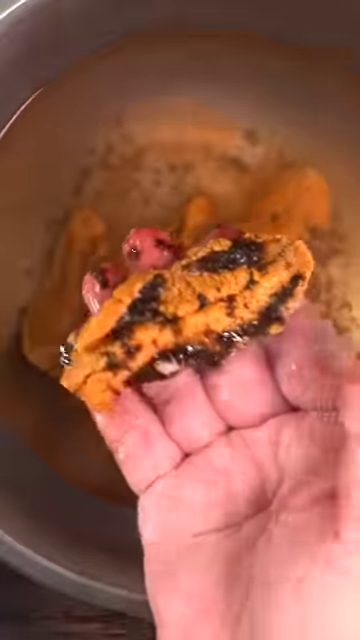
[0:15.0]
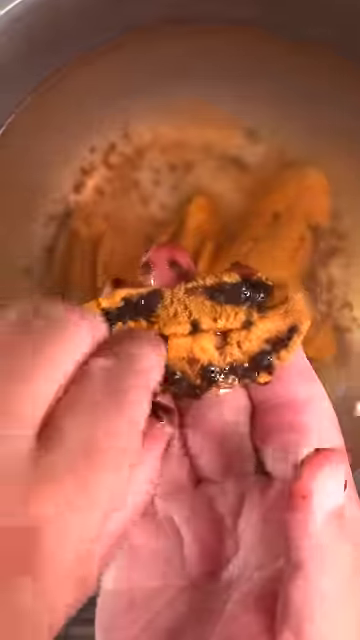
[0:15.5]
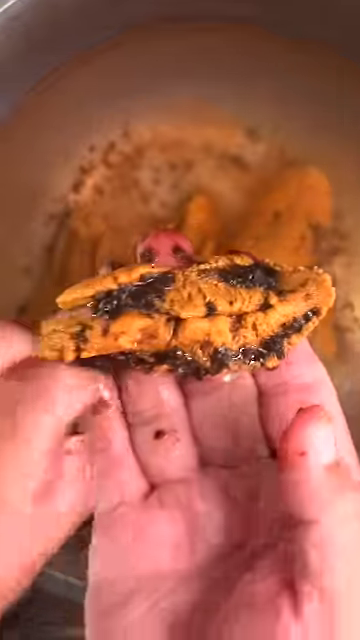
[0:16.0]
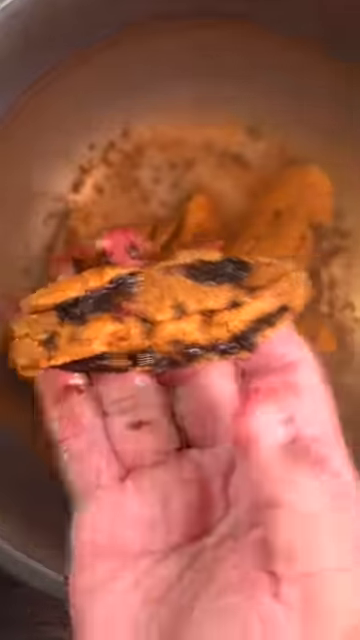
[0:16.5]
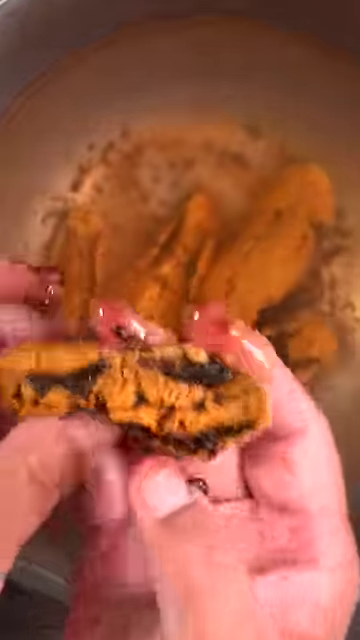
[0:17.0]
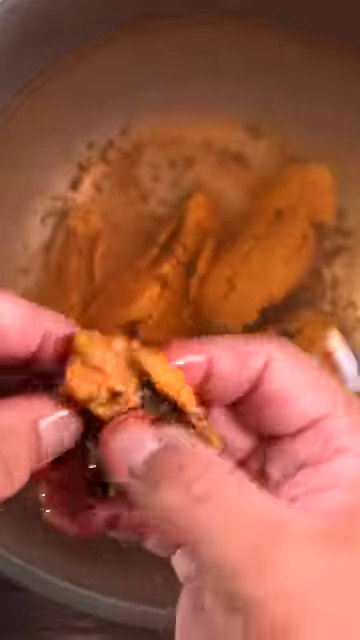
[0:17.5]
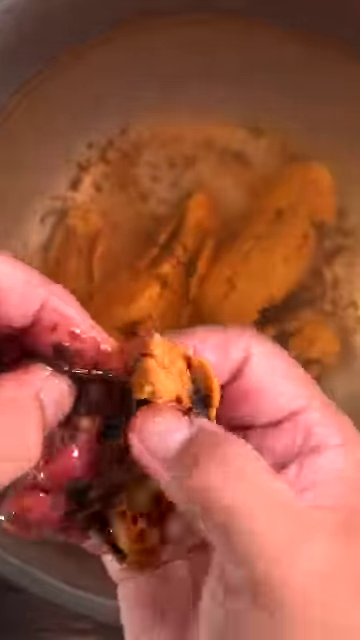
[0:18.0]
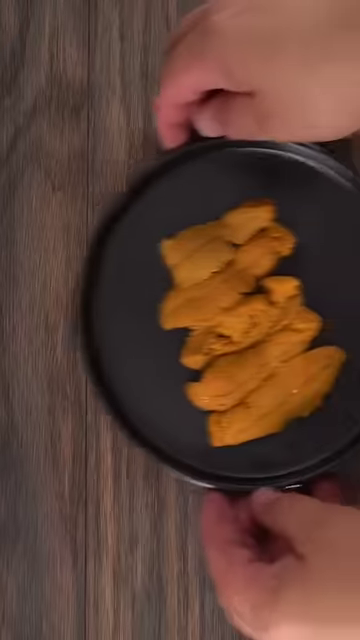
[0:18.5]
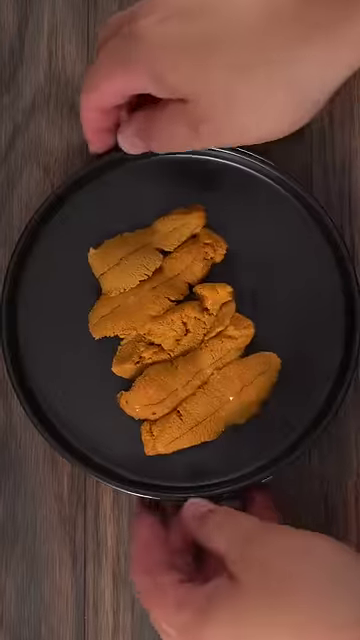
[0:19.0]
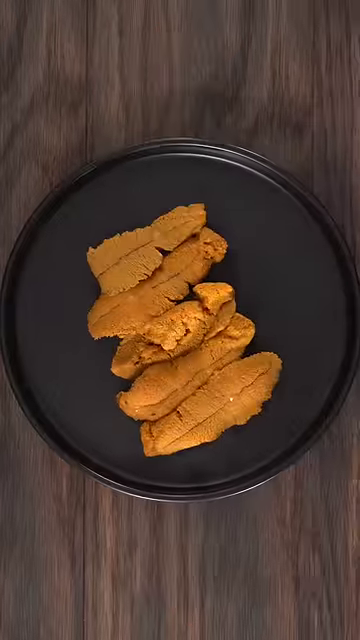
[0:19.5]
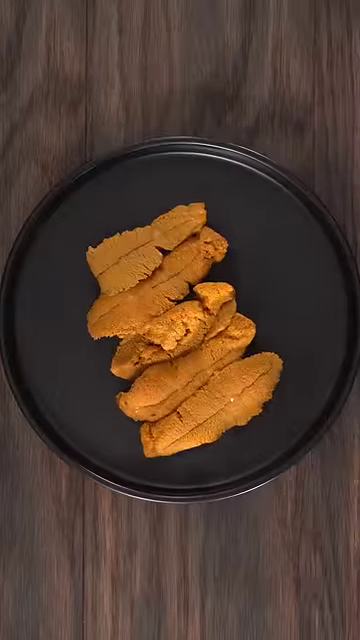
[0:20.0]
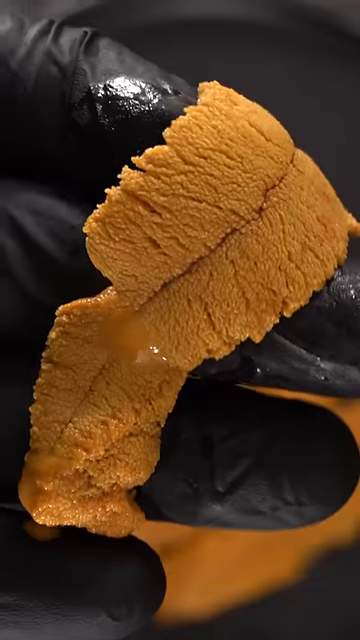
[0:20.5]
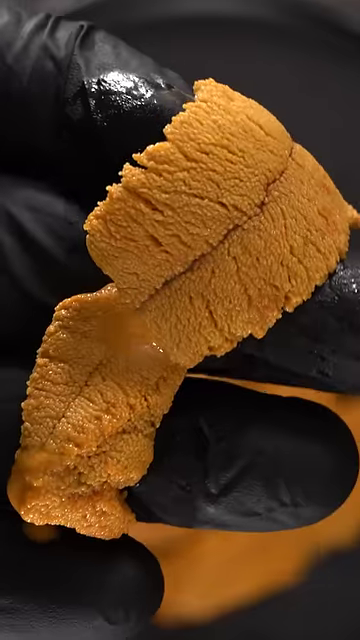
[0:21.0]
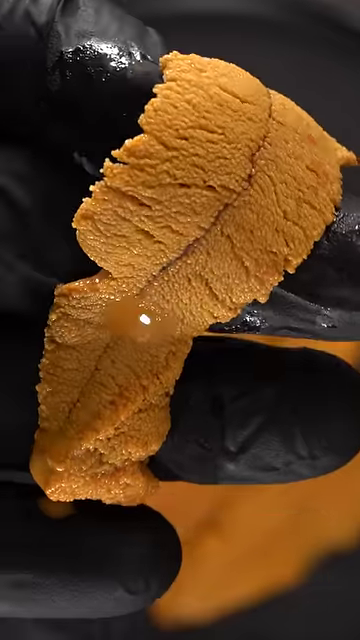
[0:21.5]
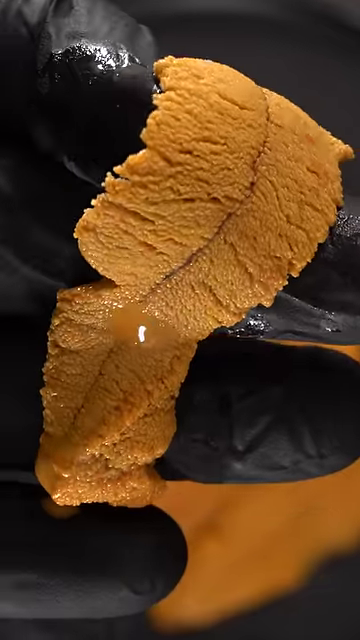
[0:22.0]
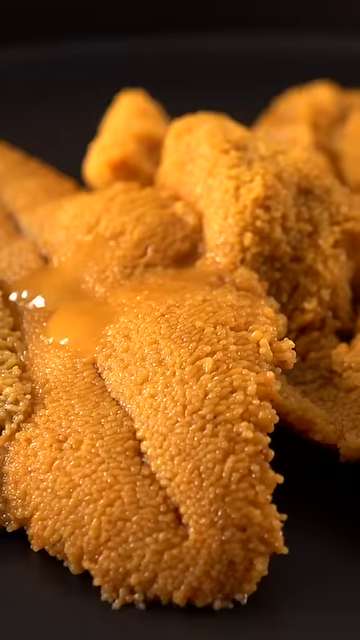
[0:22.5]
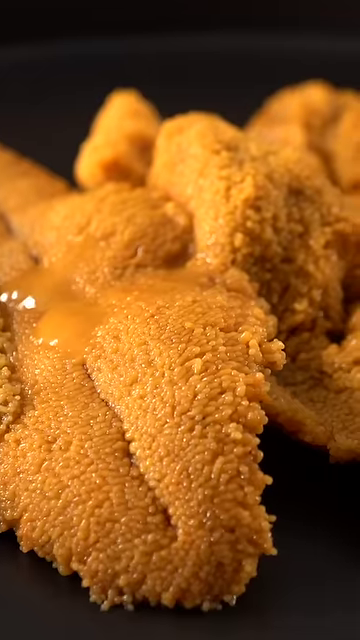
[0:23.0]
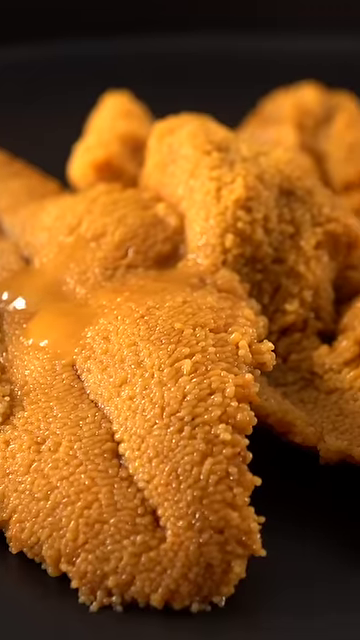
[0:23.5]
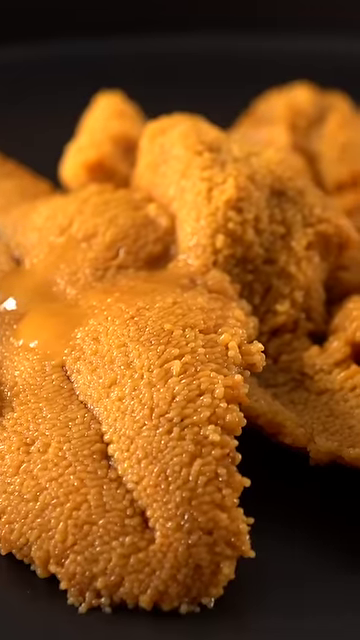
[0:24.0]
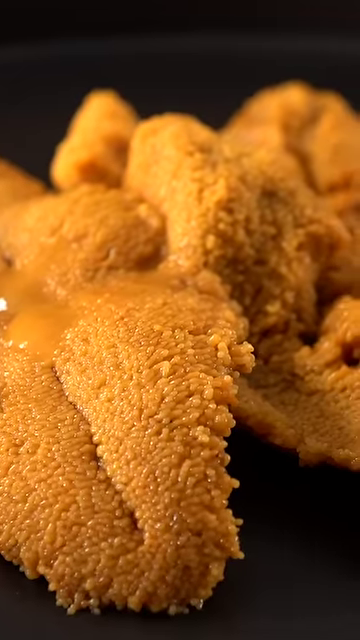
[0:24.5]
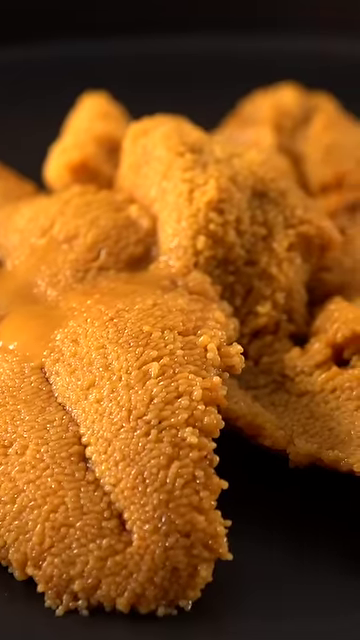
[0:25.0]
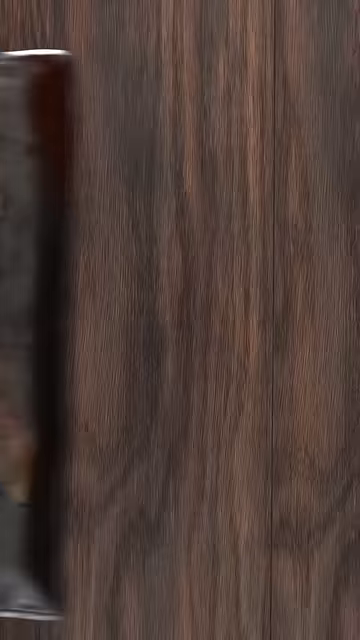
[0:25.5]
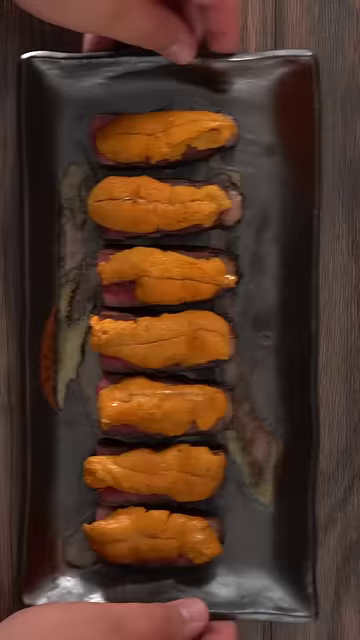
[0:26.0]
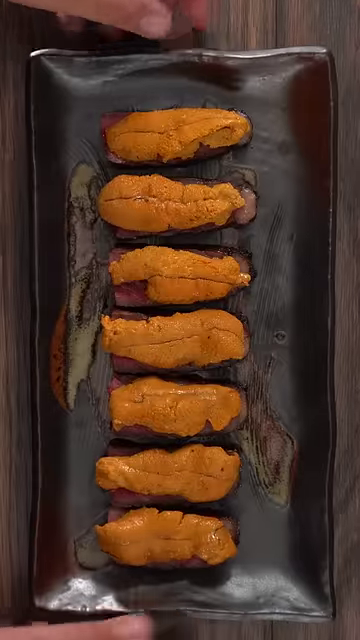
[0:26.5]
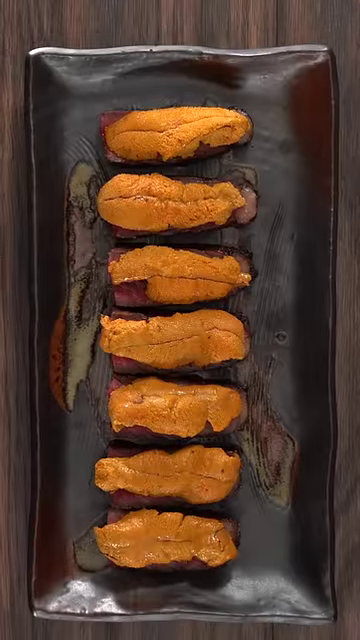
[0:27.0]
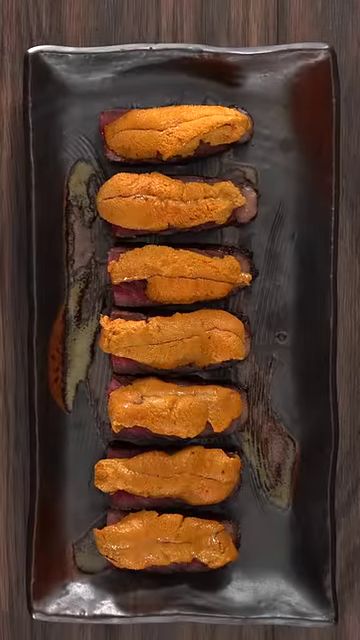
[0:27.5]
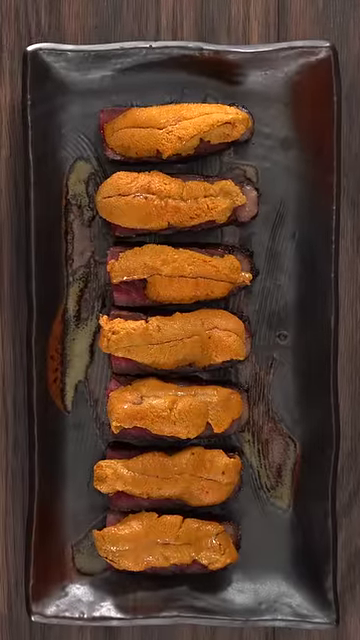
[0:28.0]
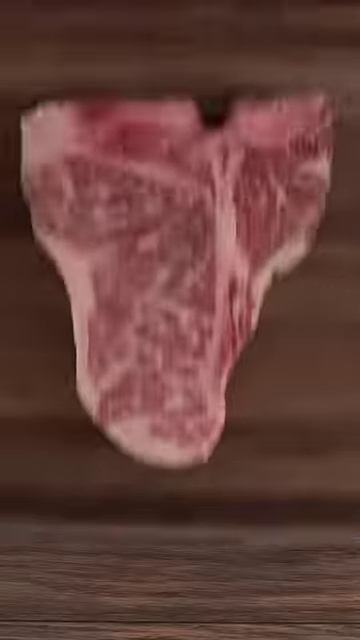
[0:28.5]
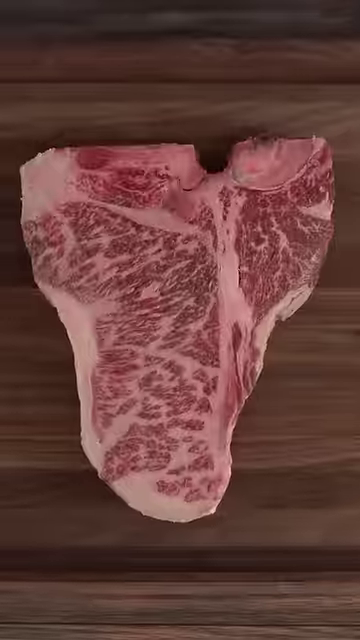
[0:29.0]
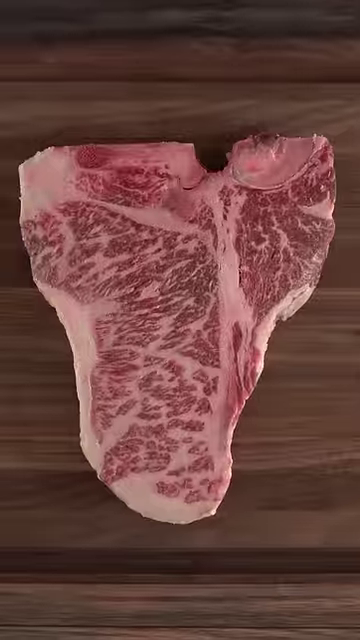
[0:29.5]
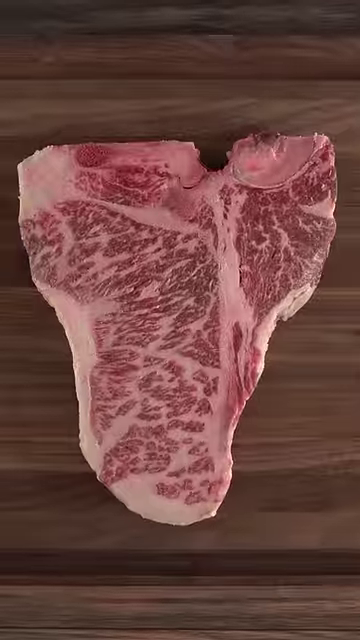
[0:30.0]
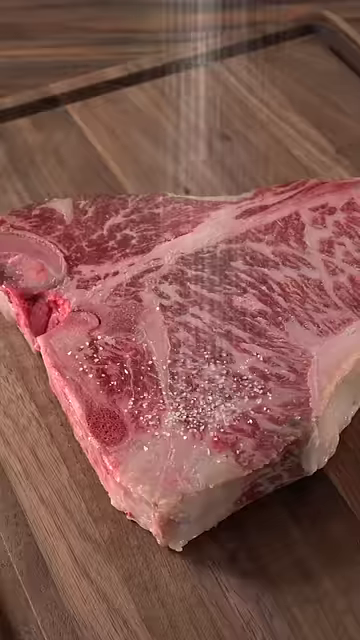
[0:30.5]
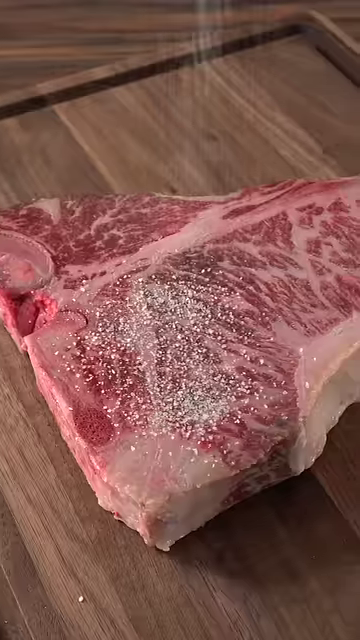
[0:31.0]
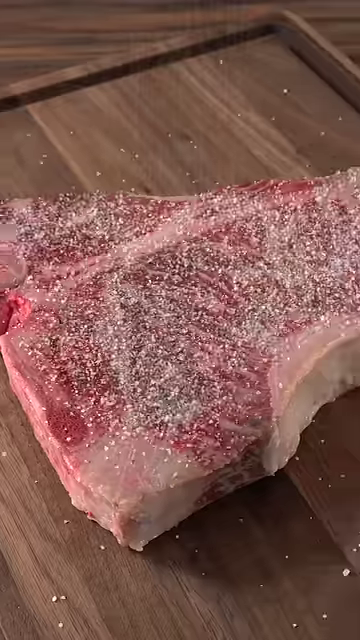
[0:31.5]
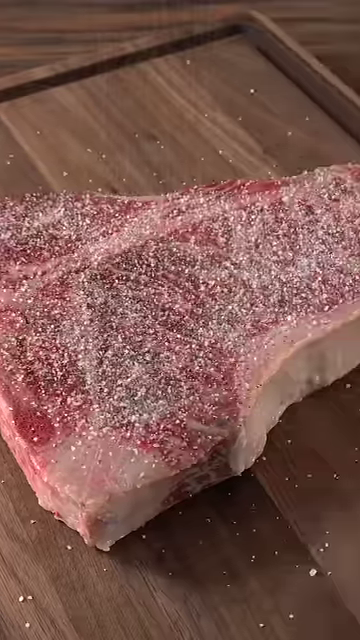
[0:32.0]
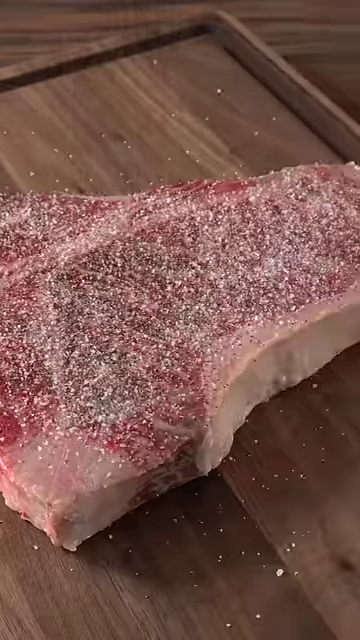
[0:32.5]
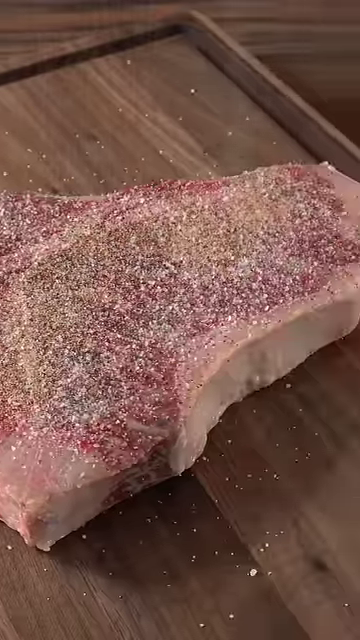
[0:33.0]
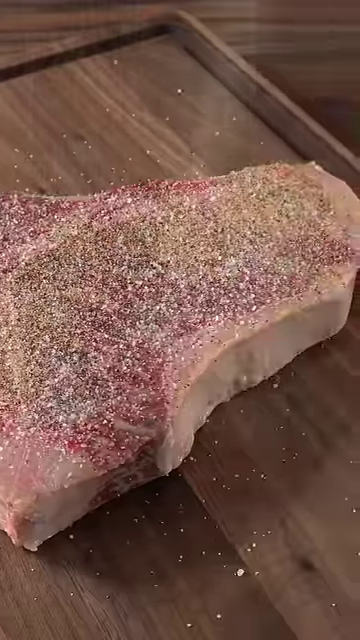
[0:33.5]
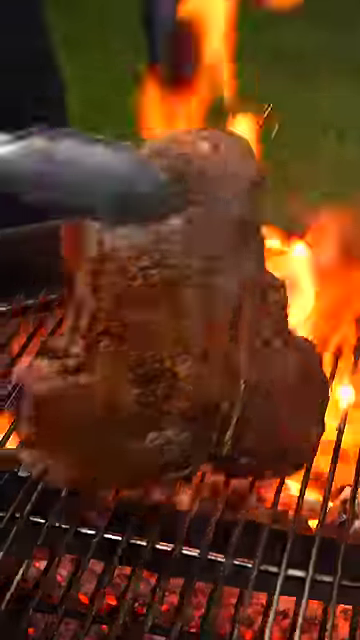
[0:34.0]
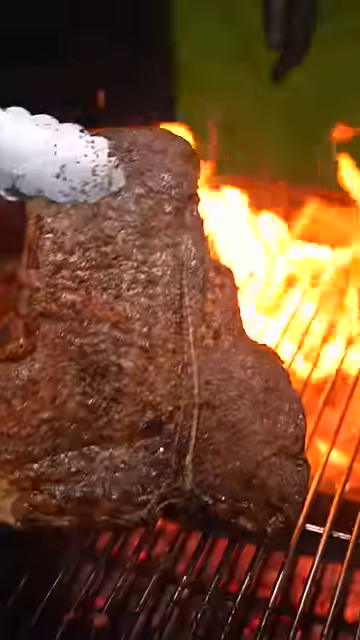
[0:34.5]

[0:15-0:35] Someone holds a yellowish, elongated oval item in their left hand. It has a couple of lines of grayish, wet, gooky-looking stuff on it, one of them broken up. Their right hand starts taking away or cleaning away some of the dark part. A close-up then shows what the yellow substance looks like after being cleaned. Five elongated pieces sit side by side on a round, gray sort of plate or platter. Someone holds the small platter in their hands and sets it on top of a countertop. Someone wearing a black glove is then seen, with the yellow substance from the center visible over the side or top of the glove; it looks like something found inside a sea urchin. A close-up shows various pieces of the yellow sea urchin center, and then the camera pans back to a rectangular tray holding seven pieces of the yellow elongated substance. Next comes what looks like a steak or maybe some kind of beef with a lot of marbled fat, shaped almost like the state of Texas. Someone sprinkles a powdered substance that looks kind of like salt on top of it, and then a darkened substance. A grill is then shown outside with flames coming up, and what looks like the same piece of meat, now browned, is turned over on the grill by someone using tongs.